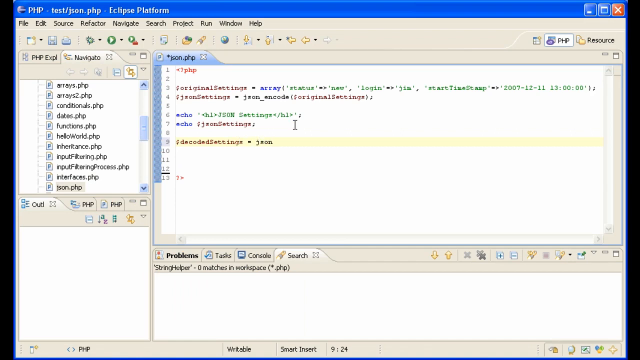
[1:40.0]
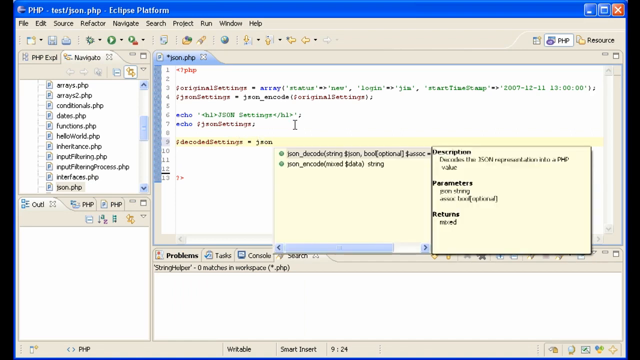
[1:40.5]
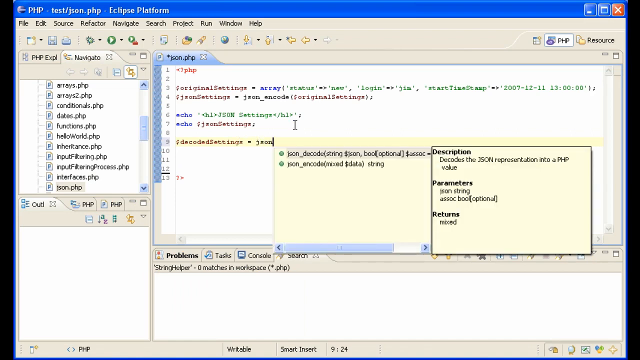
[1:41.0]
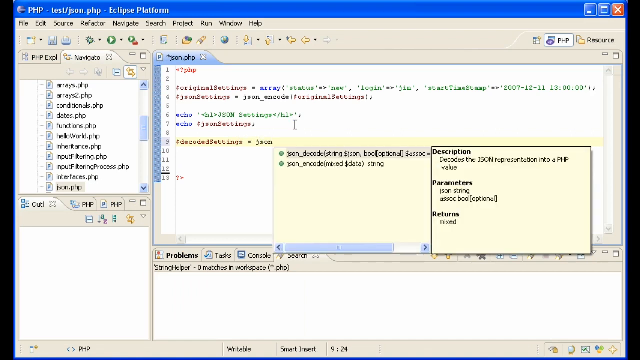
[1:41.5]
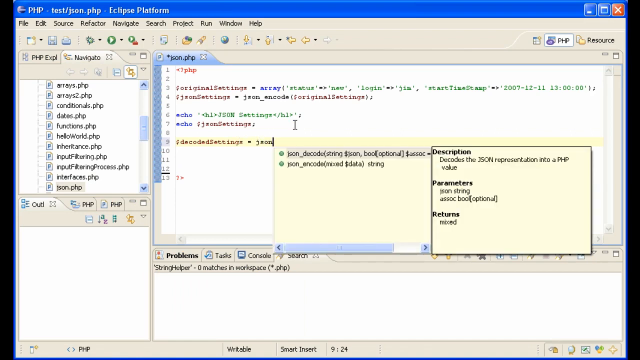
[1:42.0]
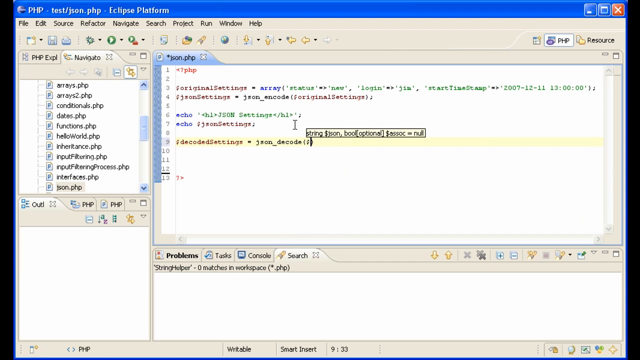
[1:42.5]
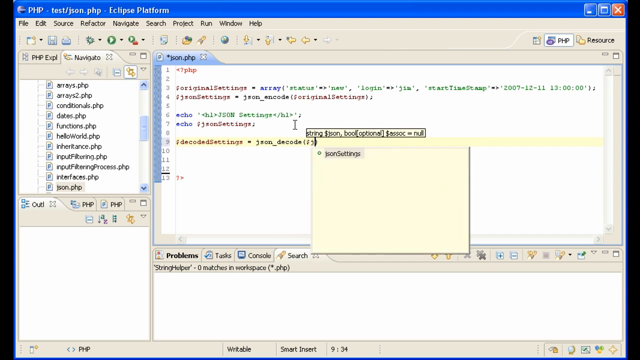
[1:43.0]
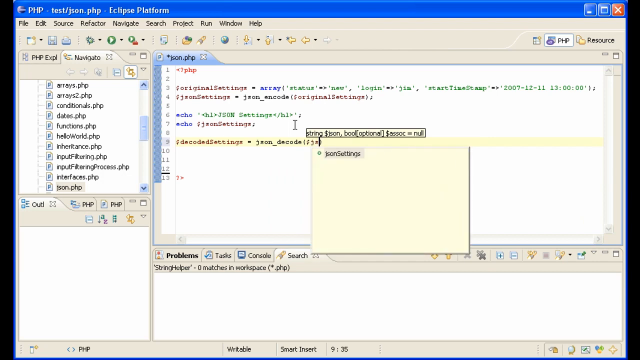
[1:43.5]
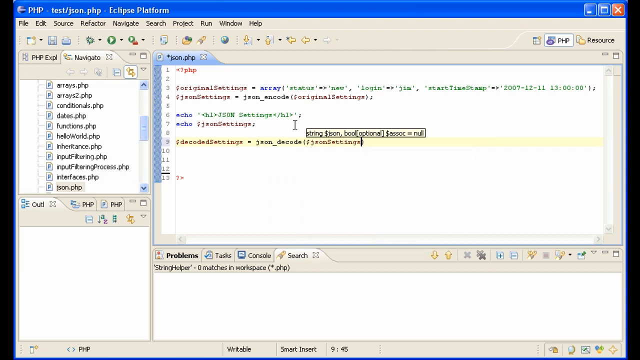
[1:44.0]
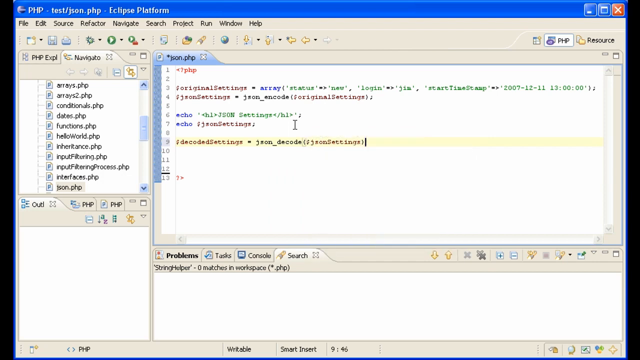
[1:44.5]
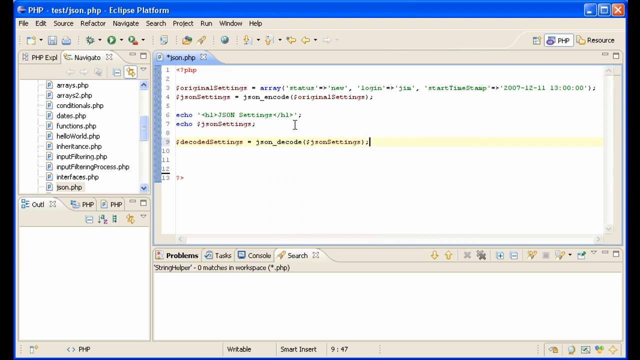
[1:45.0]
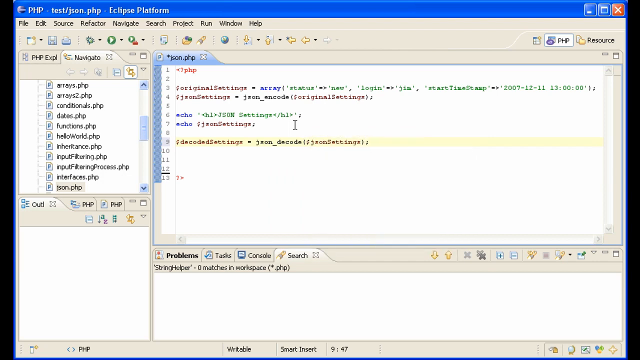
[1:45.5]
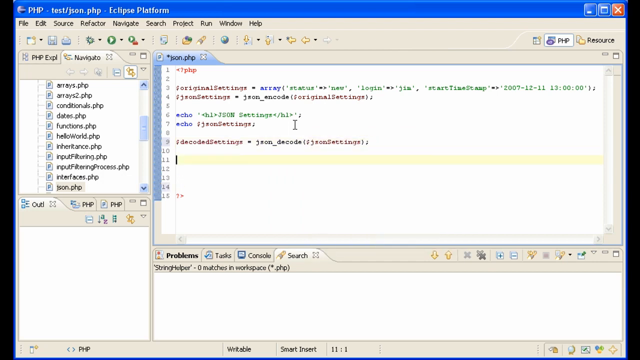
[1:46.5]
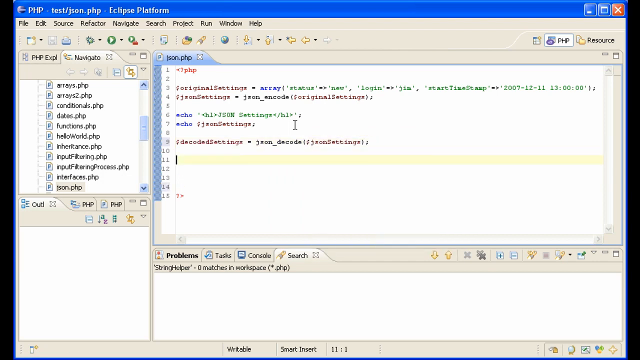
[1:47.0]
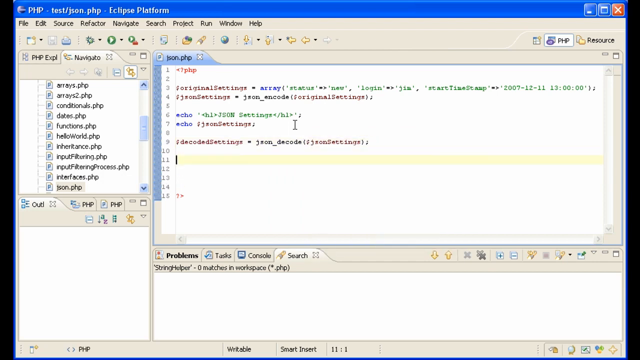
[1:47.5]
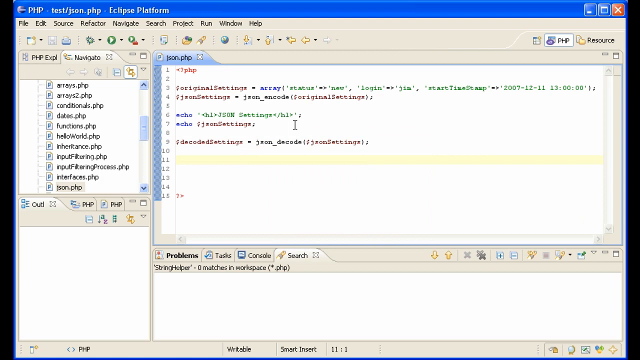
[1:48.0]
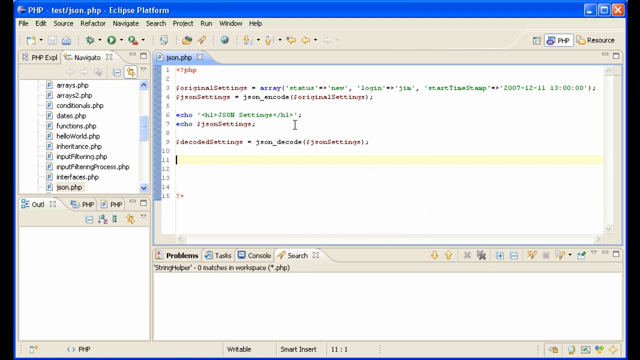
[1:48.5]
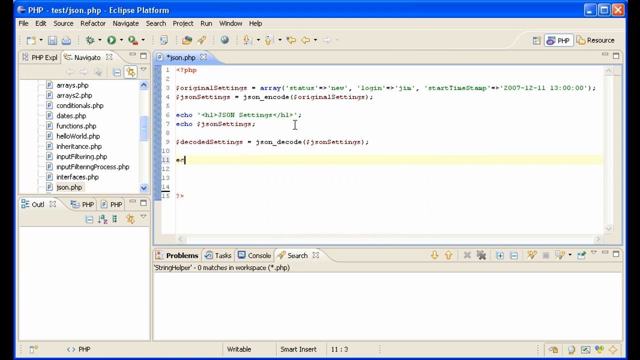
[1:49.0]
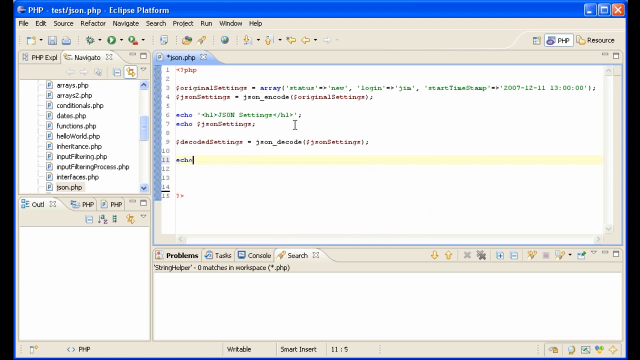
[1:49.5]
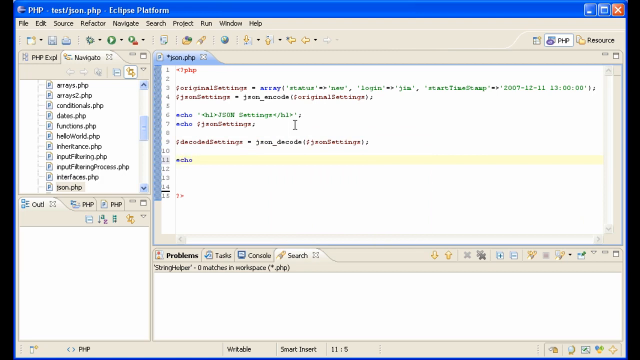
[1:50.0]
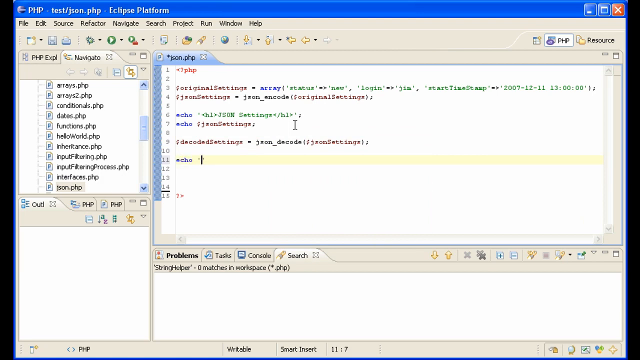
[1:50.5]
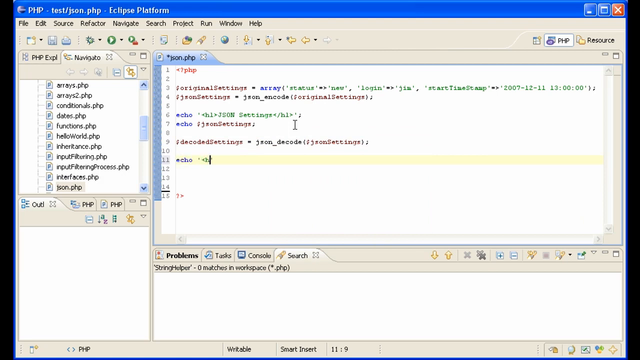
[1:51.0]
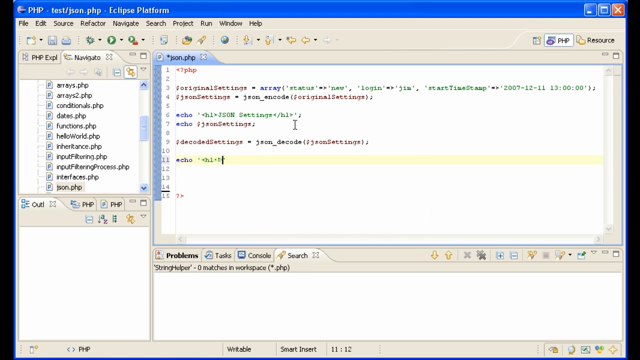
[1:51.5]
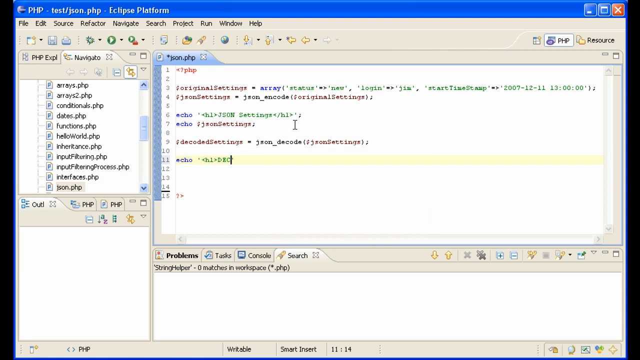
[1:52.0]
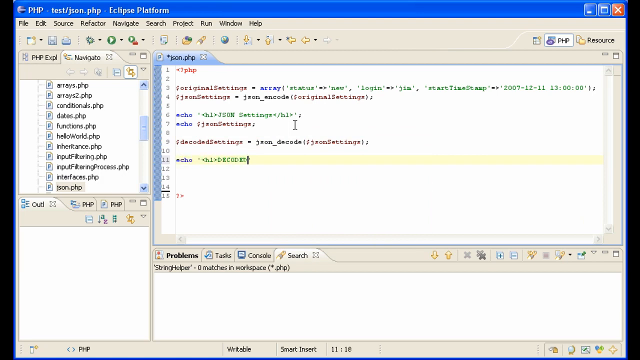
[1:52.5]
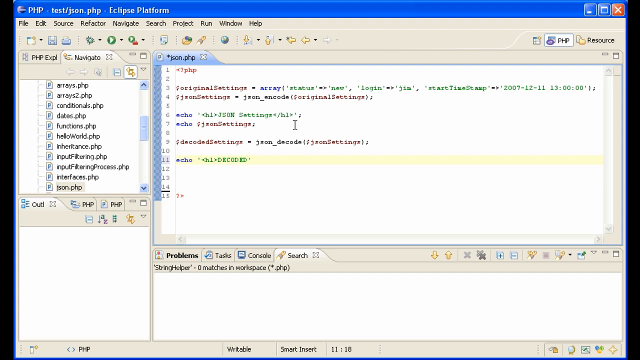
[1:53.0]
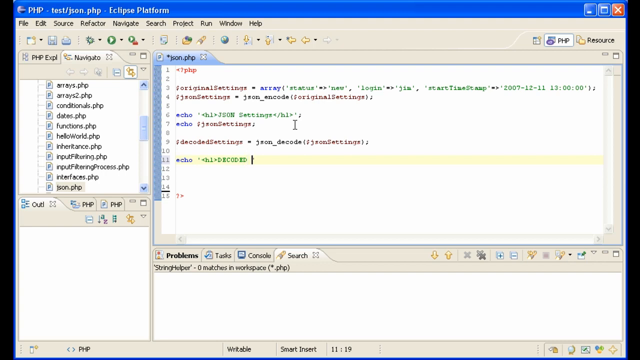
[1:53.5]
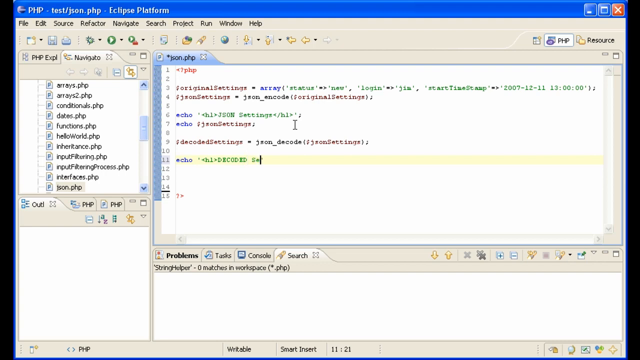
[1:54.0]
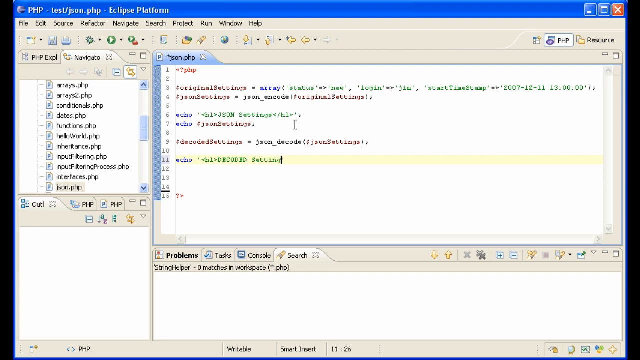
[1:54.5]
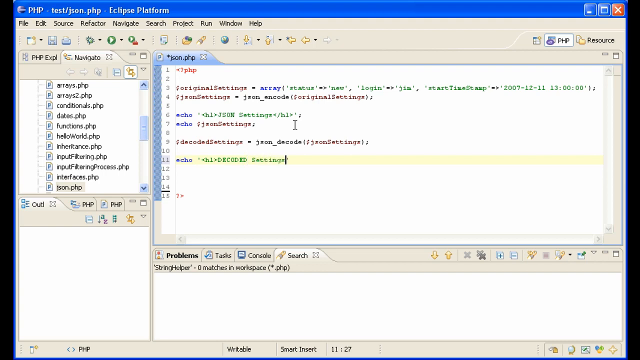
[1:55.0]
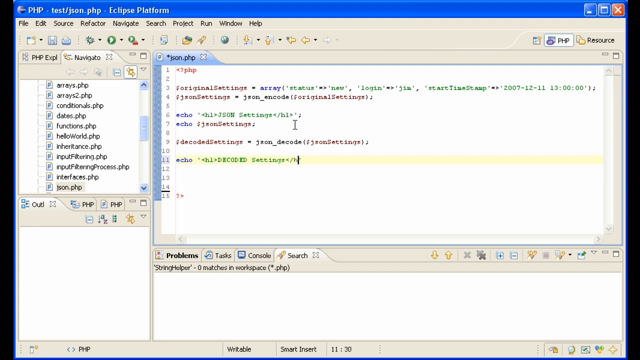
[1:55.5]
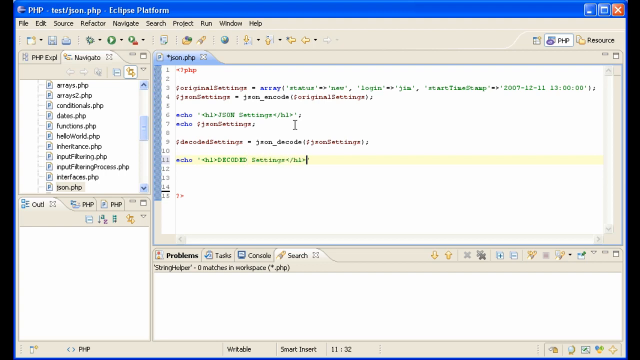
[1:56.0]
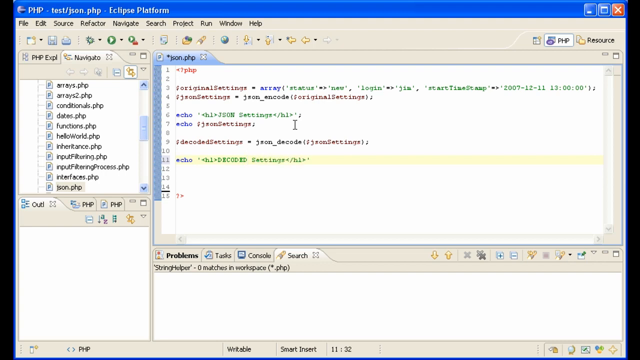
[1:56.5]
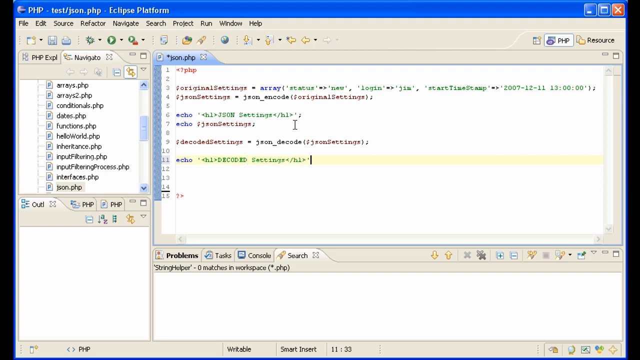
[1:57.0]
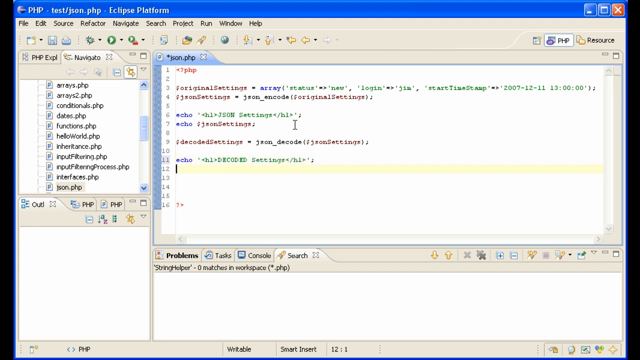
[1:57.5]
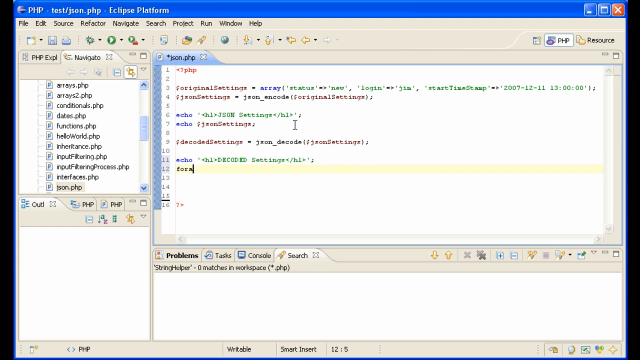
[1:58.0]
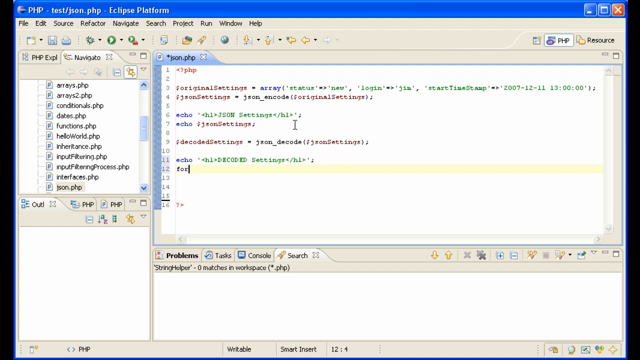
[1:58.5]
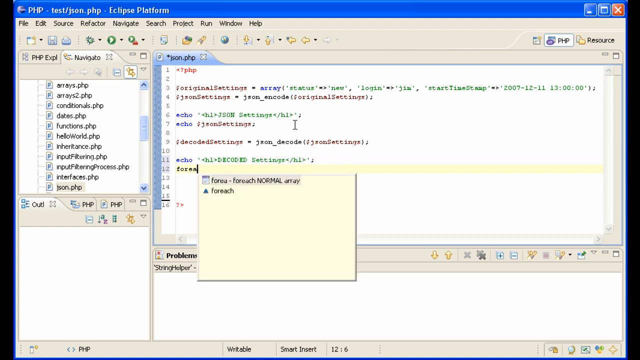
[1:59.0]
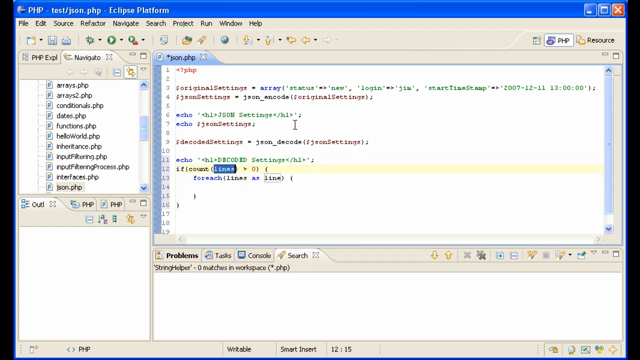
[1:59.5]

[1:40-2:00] A couple of pop-ups appear below line 9 with information such as description, parameters, and returns. Additional text, including JSON settings and a semicolon, is typed onto line 9. The cursor moves down to line 11, which becomes highlighted, and blinks there for a few moments. The word echo is typed on line 11, followed by H1 DECODED settings, then H1 again and a semicolon. The word forea starts to be typed on line 12, which becomes the highlighted line, and another pop-up appears directly below that line. Something appears to get selected, and line 12 reads "if count lines 0," while line 13, now highlighted, reads "for each lines as line."